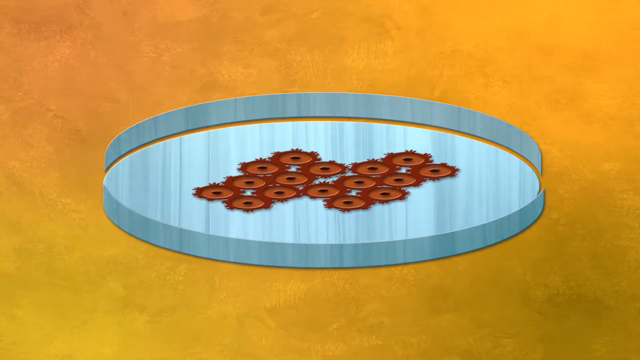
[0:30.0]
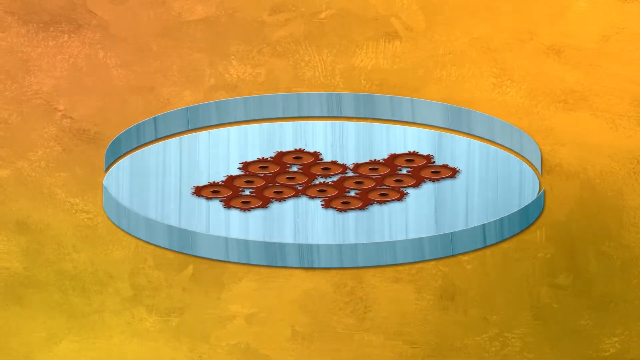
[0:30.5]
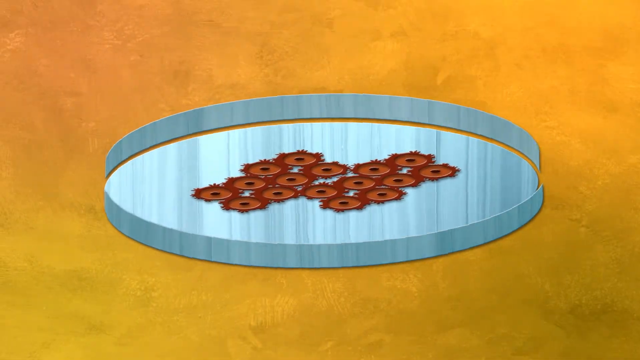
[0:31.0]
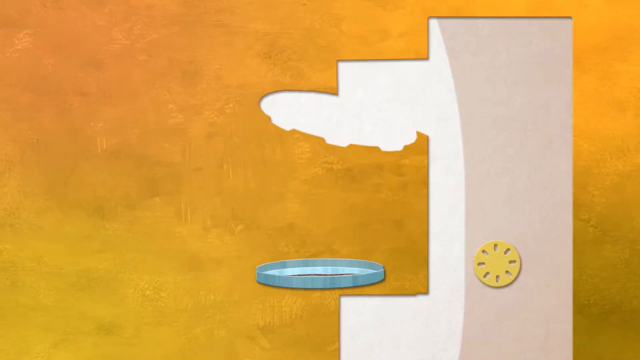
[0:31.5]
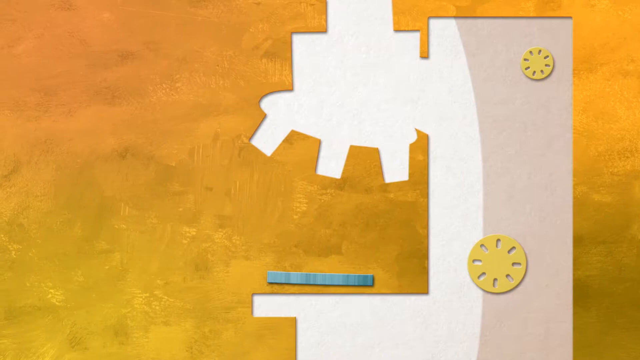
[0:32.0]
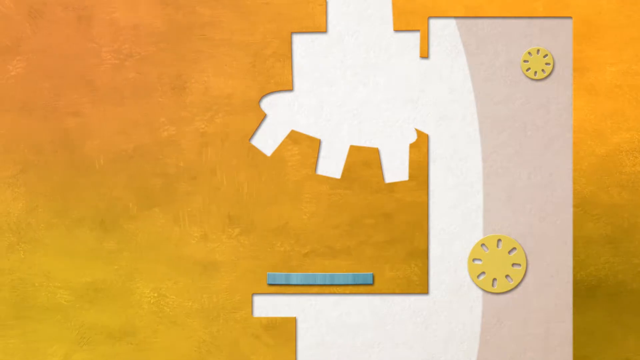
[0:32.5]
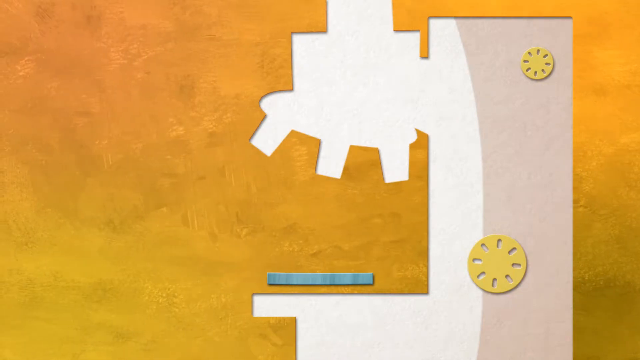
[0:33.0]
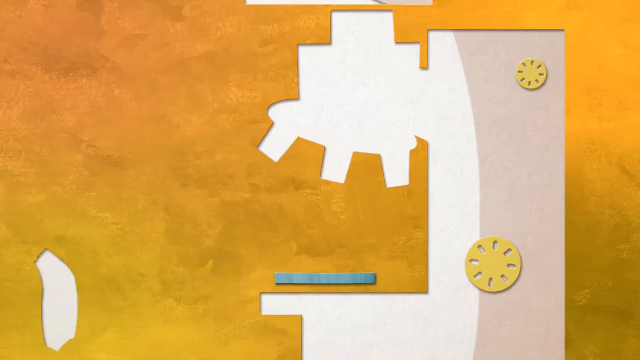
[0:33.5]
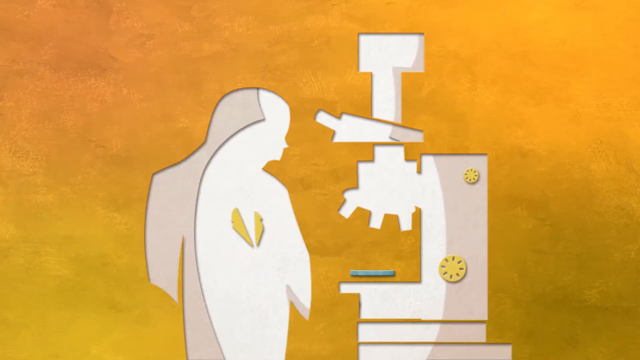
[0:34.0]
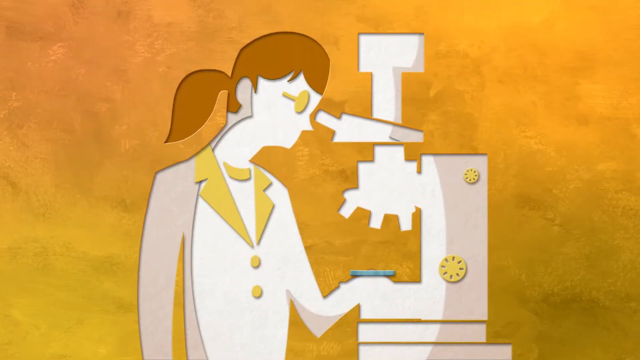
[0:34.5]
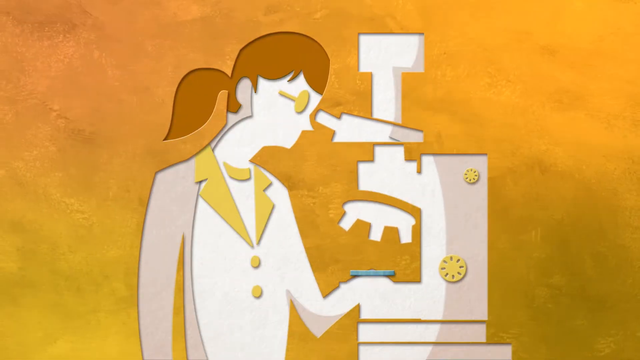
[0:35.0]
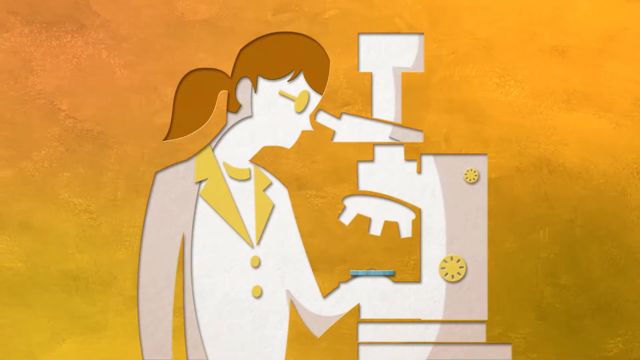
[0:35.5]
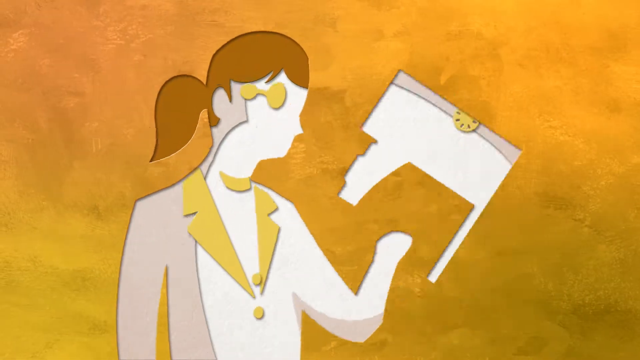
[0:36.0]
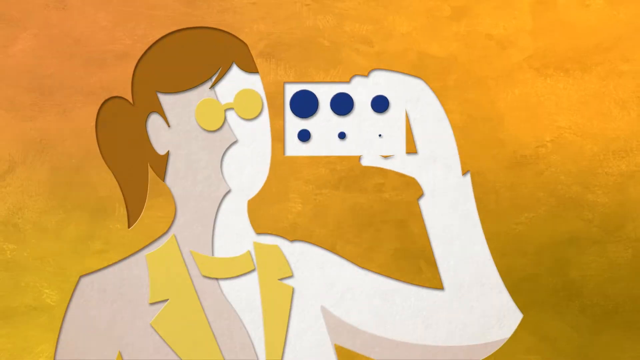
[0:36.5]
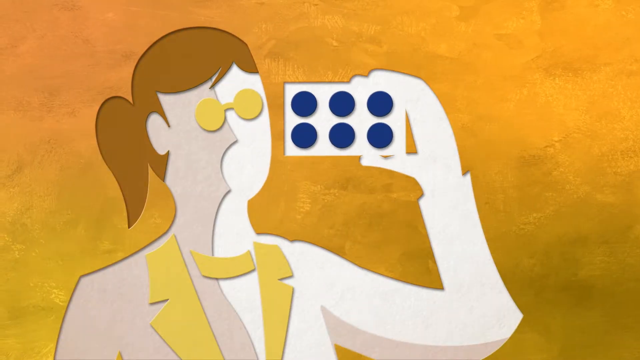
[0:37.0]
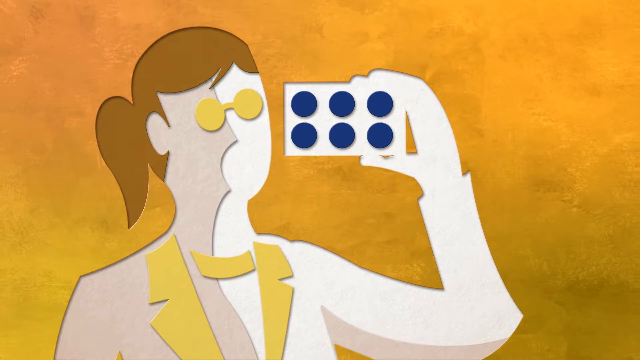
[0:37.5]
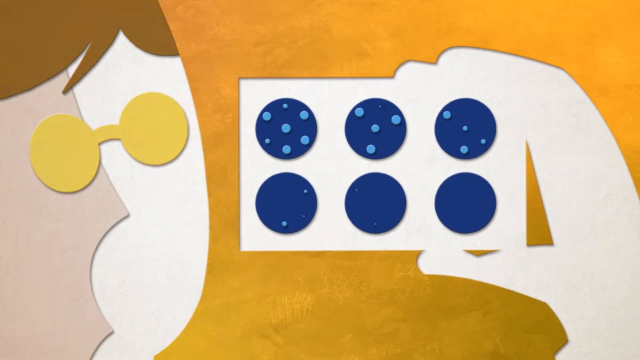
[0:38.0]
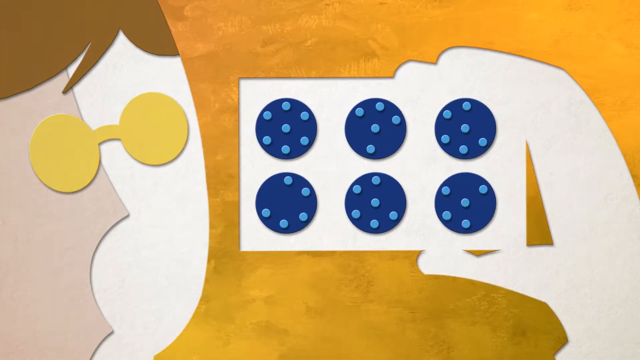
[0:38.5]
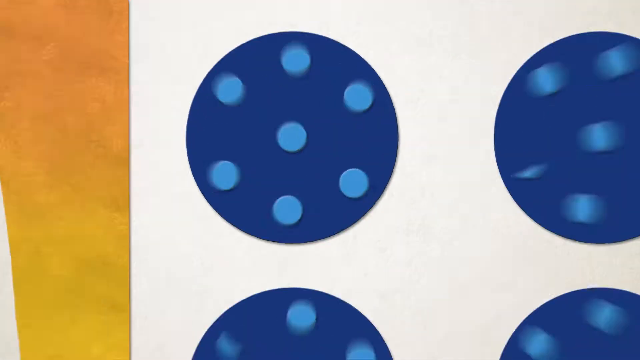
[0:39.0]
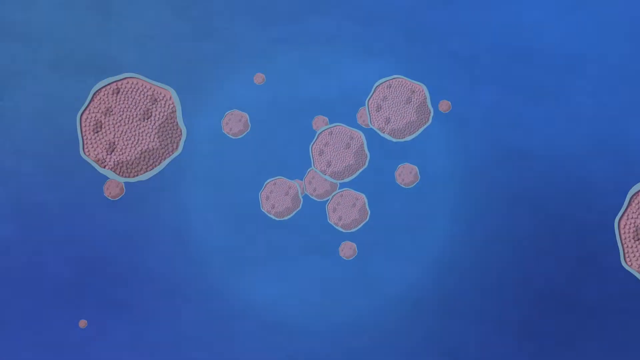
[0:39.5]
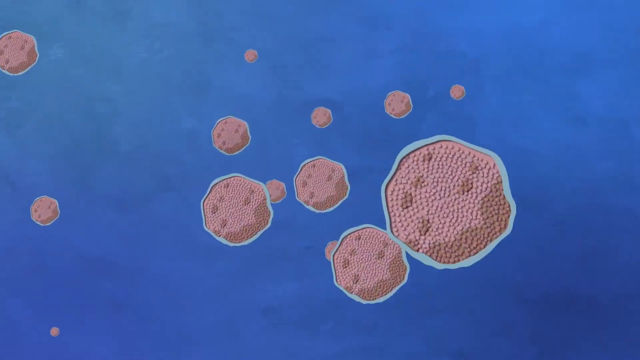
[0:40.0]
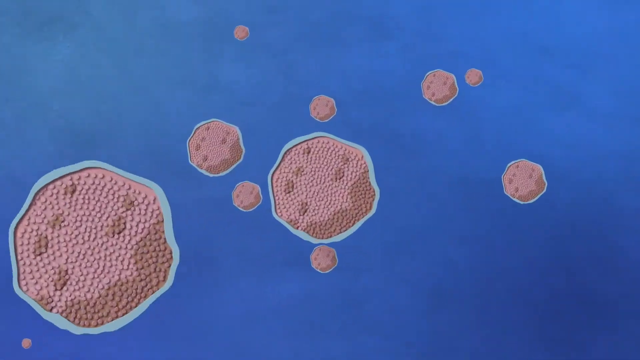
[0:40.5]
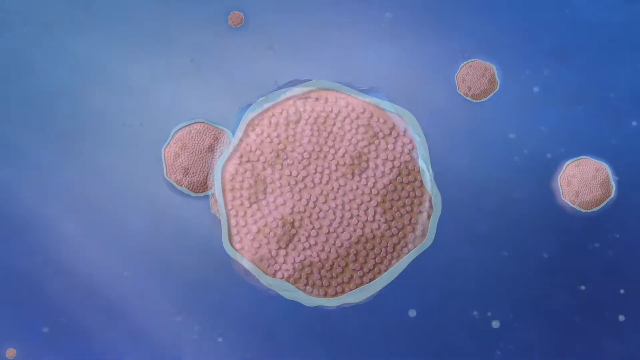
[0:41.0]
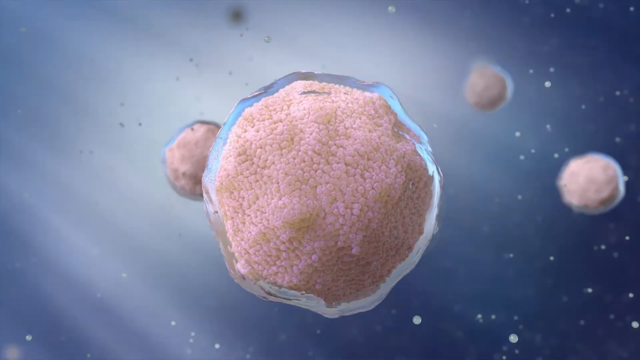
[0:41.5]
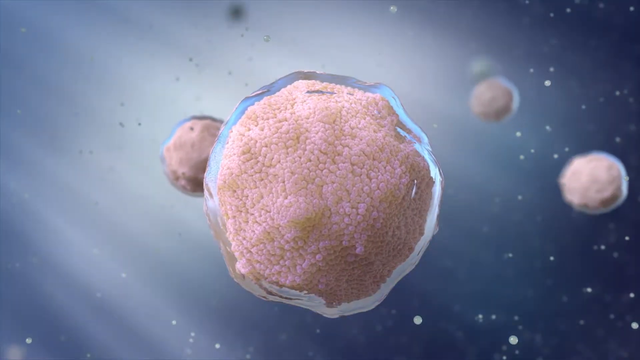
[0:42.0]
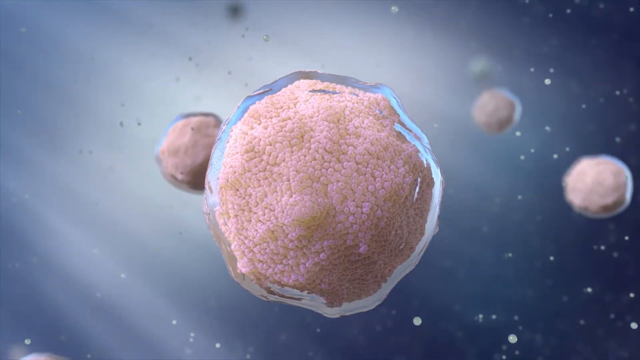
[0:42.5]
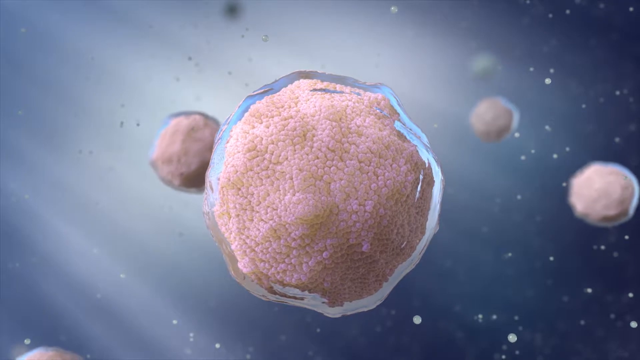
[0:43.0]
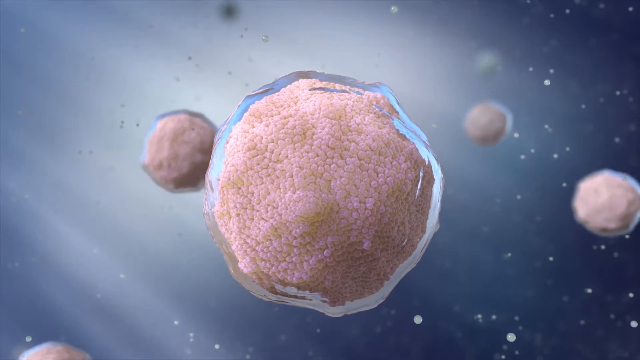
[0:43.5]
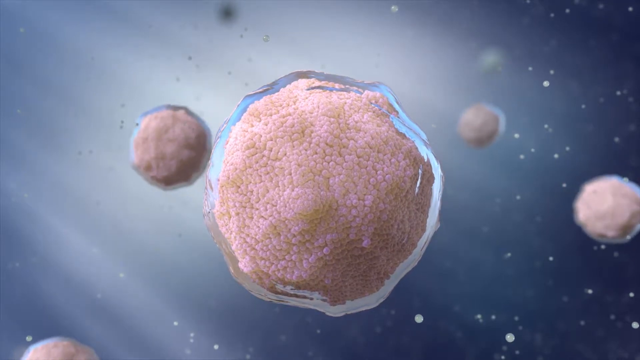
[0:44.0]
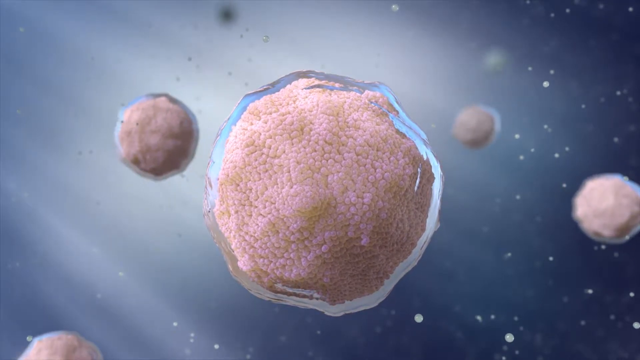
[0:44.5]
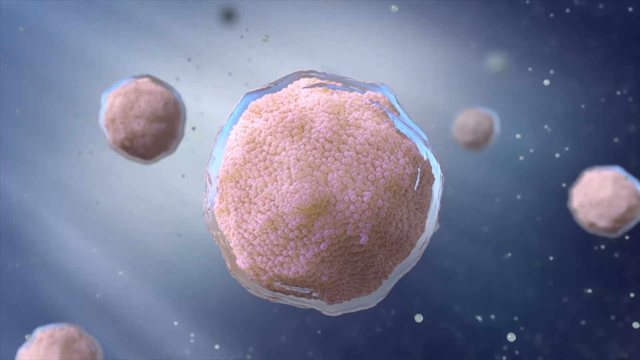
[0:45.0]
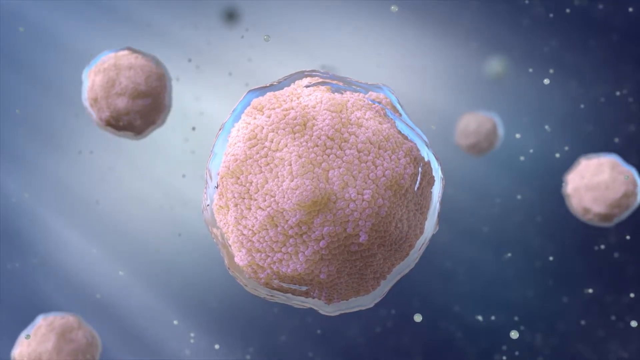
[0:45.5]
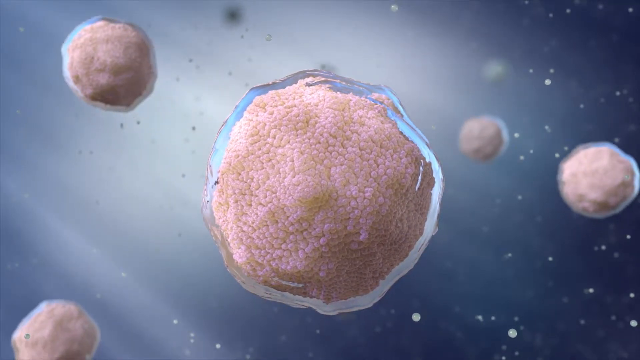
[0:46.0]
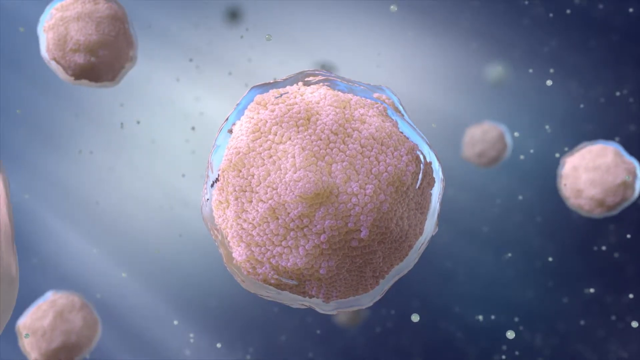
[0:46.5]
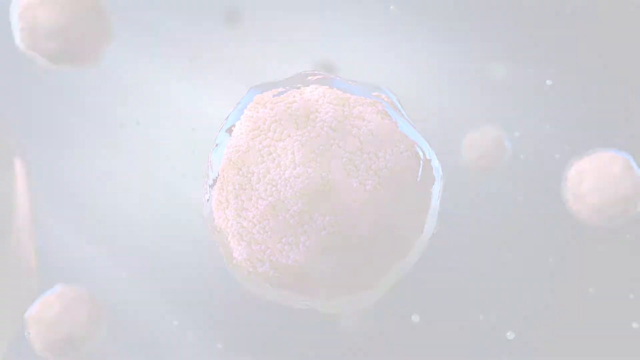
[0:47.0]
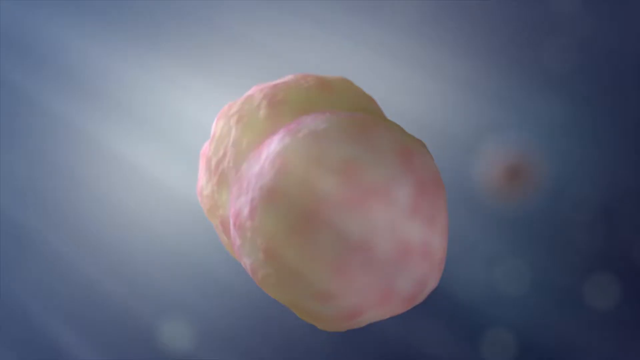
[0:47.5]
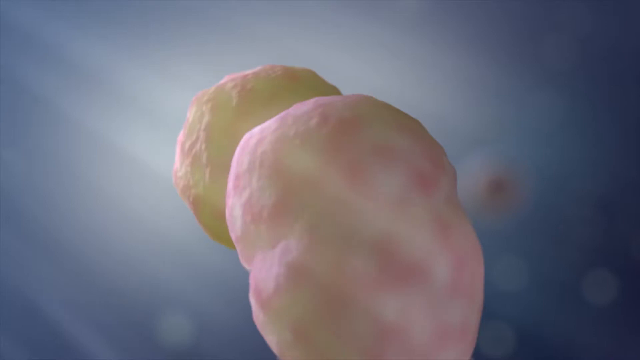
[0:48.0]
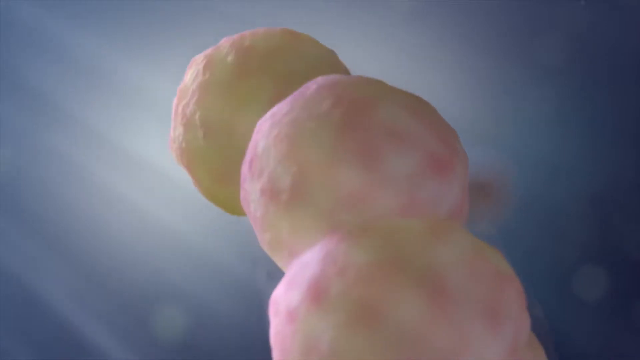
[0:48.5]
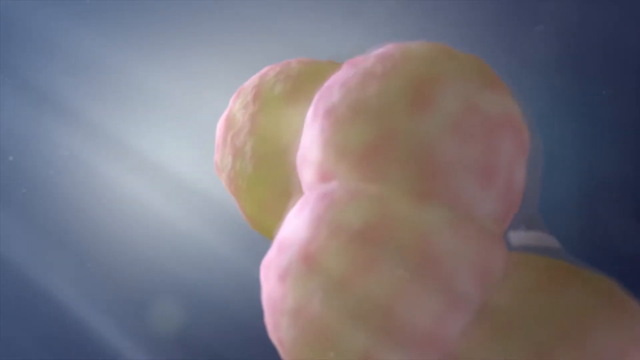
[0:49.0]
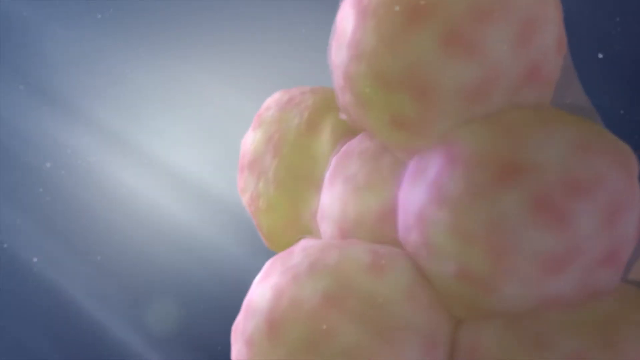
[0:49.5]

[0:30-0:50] Cells sit on a silver petri dish in what looks like a 3D animation, against an orangish backdrop. The petri dish flies away and ends up underneath an all-white microscope, seen as something like a silhouette. The silhouette of a female scientist then looks into the microscope, down at the petri dish. The microscope turns into a rectangular object like a cell phone, apparently the petri dish, which she now holds in her hand, rectangular instead of circular. The rectangular object contains lots of circles, and as the view zooms in, each circle has many blue circles on it. The view zooms into these little blue circles, revealing many small cells clustered together almost like a universe; close enough, it looks like space, with the little bacteria looking like planets flying around in space on the petri dish. The planets are then shown multiplying as the bacteria multiply.